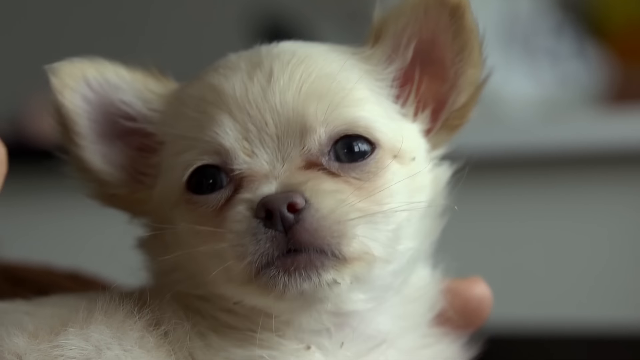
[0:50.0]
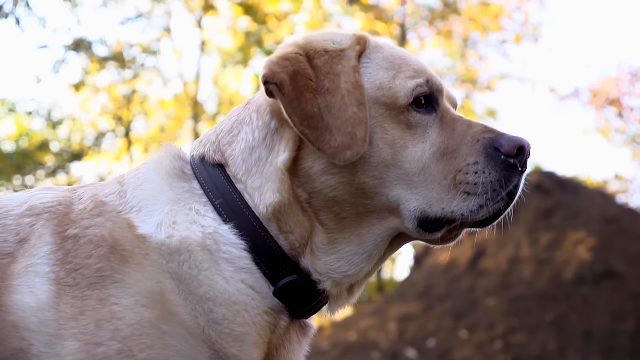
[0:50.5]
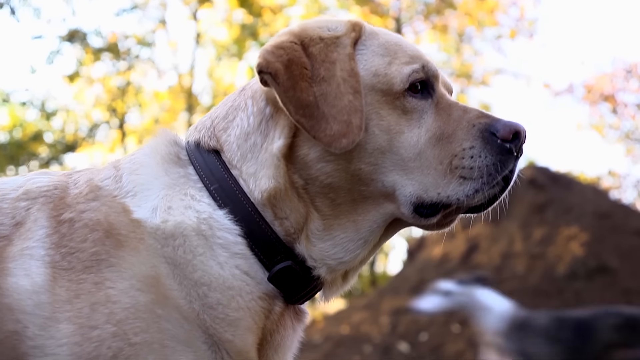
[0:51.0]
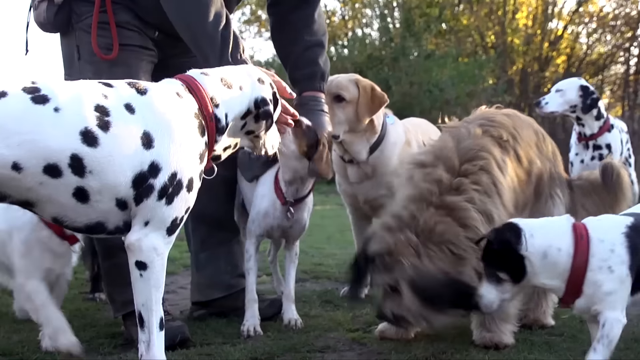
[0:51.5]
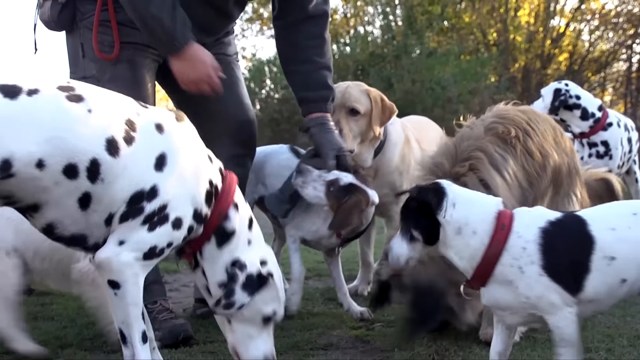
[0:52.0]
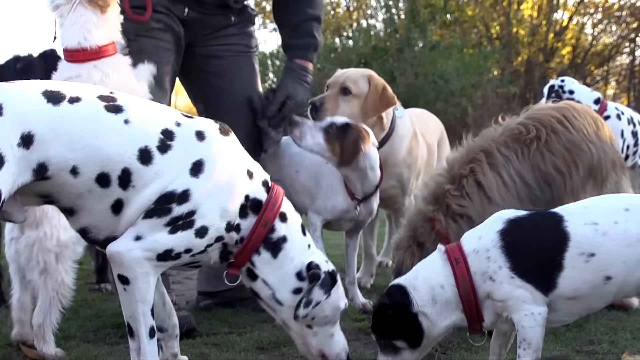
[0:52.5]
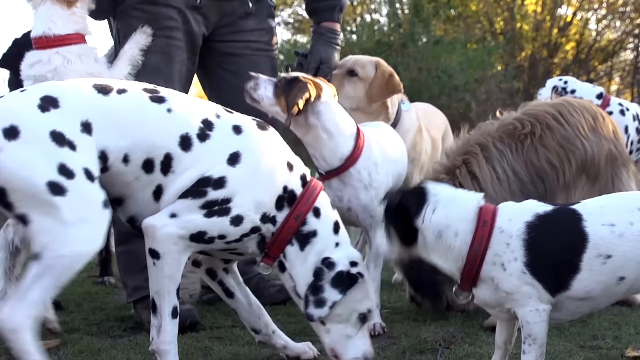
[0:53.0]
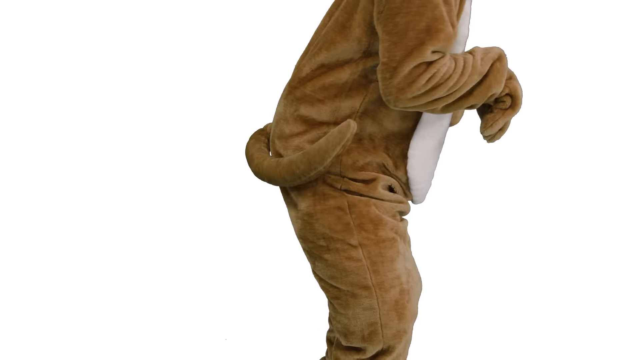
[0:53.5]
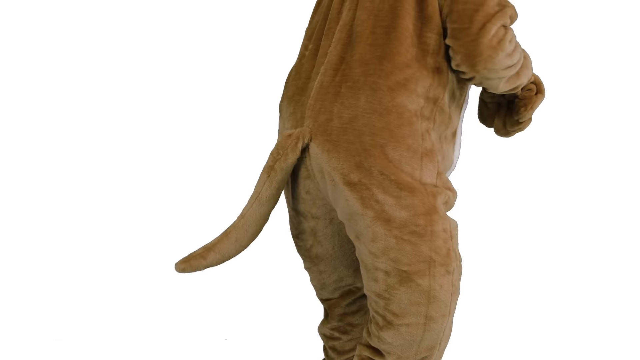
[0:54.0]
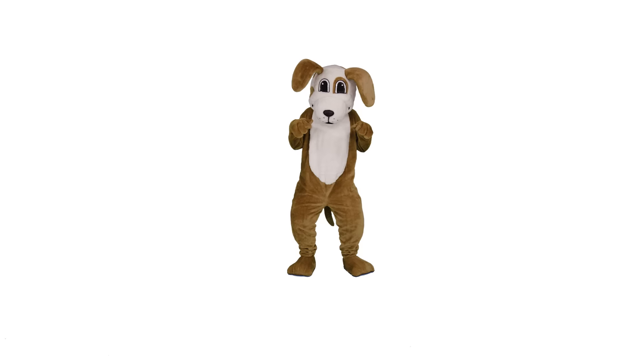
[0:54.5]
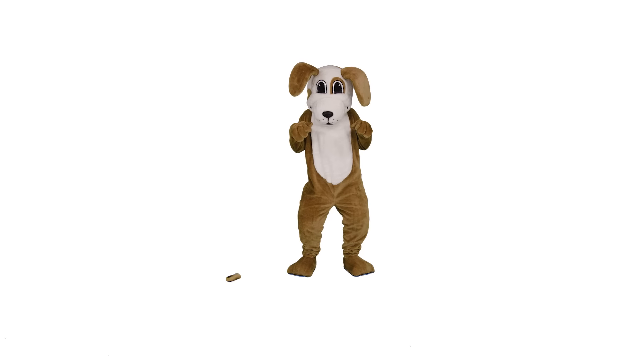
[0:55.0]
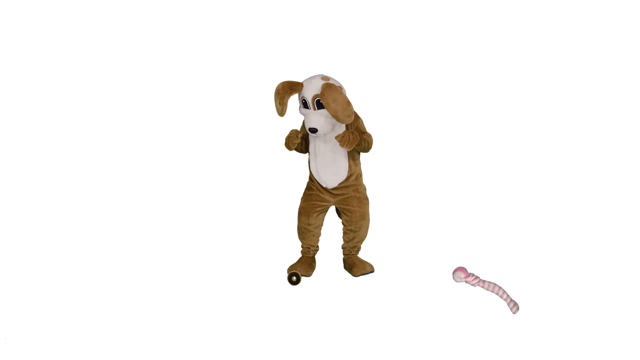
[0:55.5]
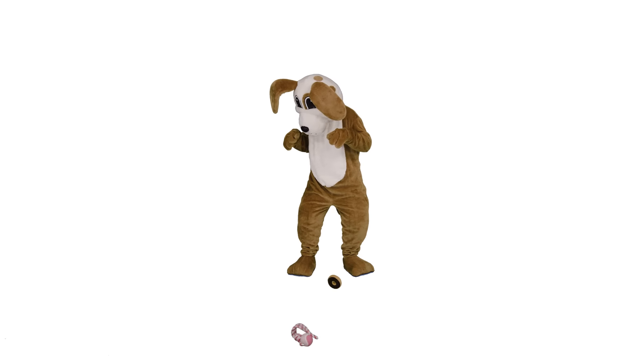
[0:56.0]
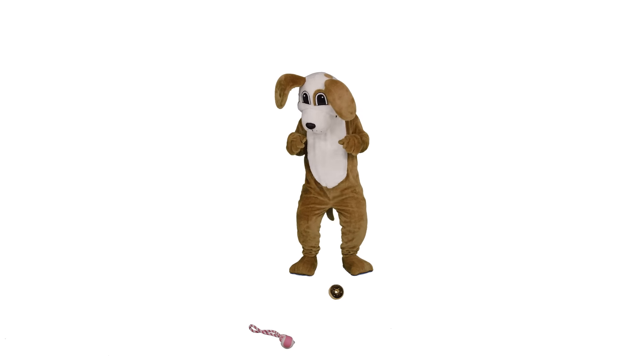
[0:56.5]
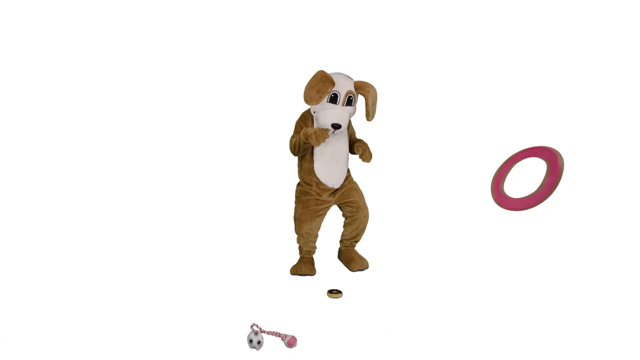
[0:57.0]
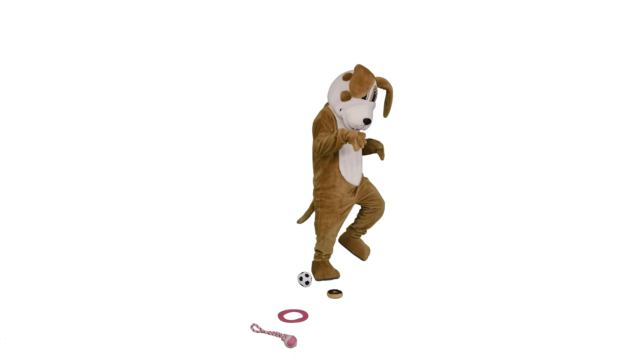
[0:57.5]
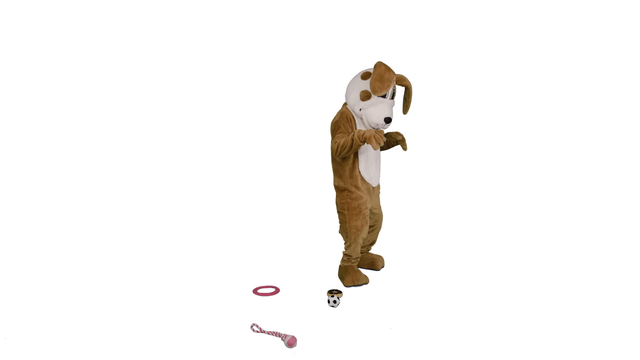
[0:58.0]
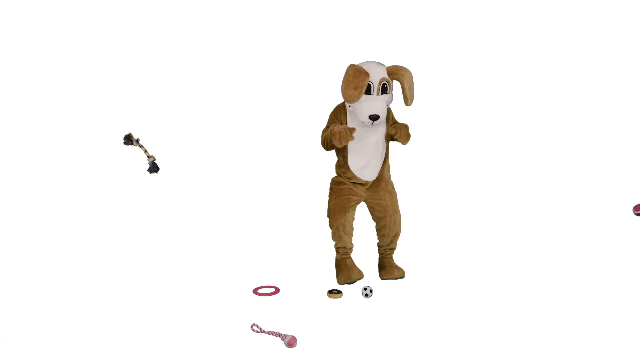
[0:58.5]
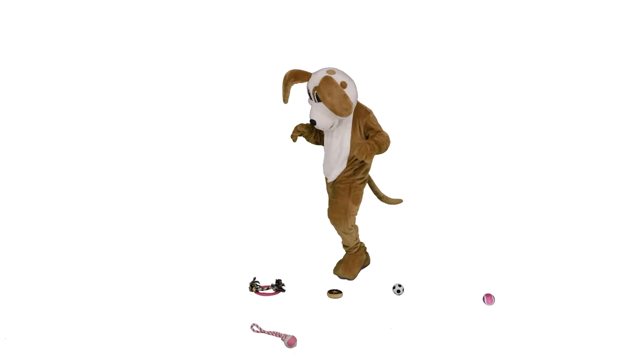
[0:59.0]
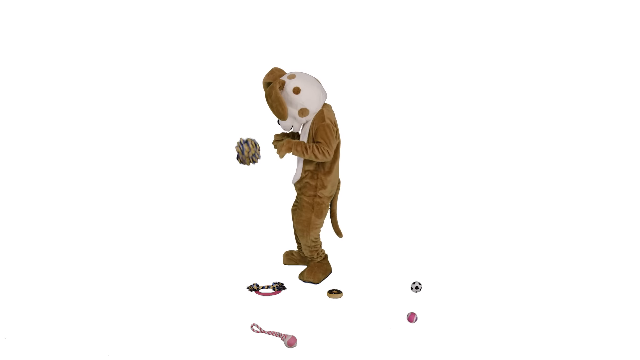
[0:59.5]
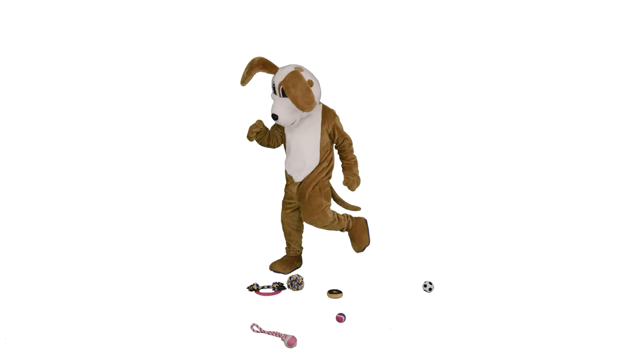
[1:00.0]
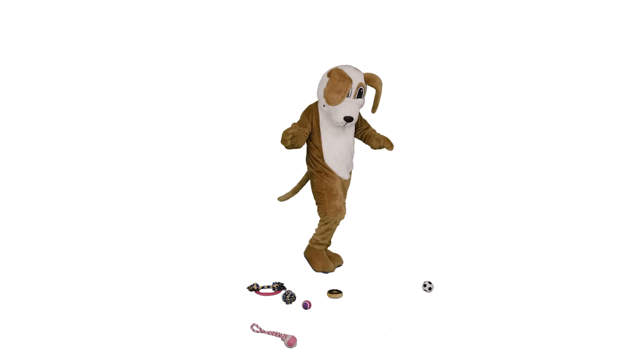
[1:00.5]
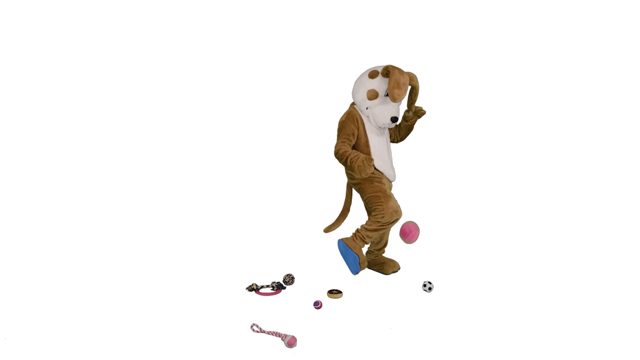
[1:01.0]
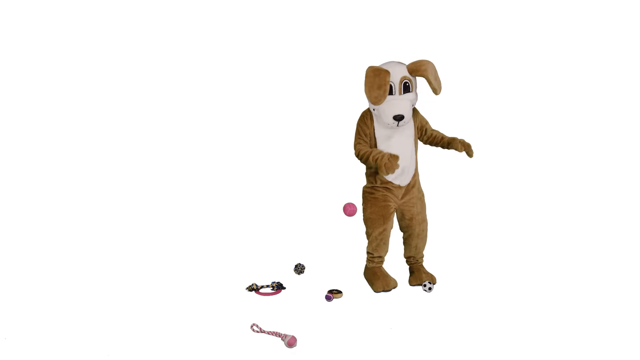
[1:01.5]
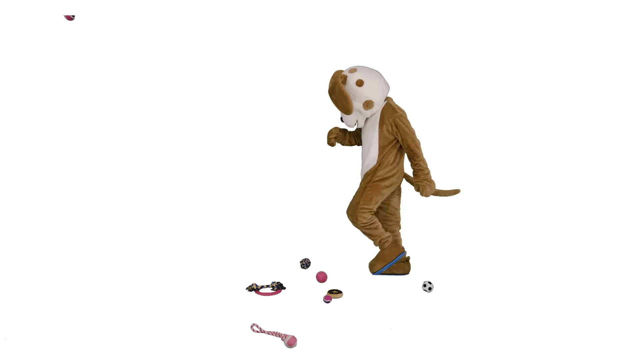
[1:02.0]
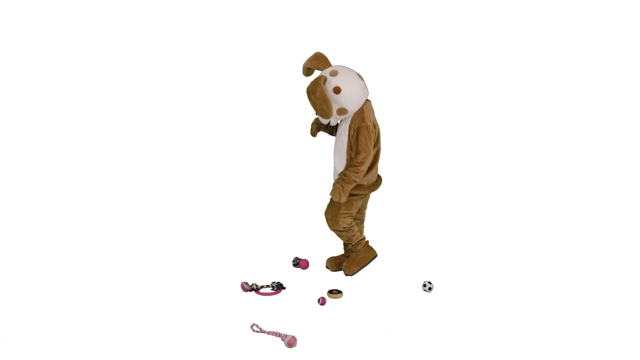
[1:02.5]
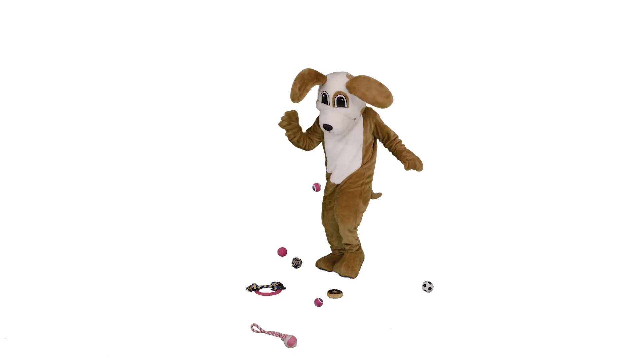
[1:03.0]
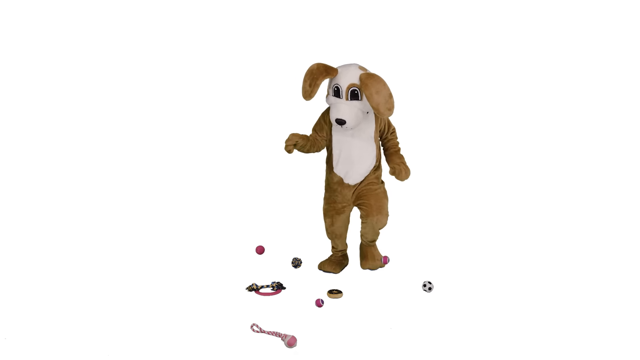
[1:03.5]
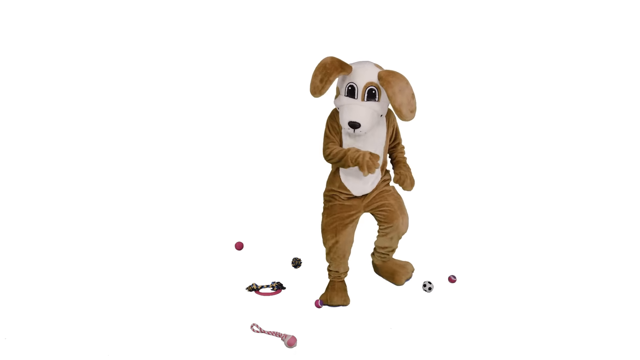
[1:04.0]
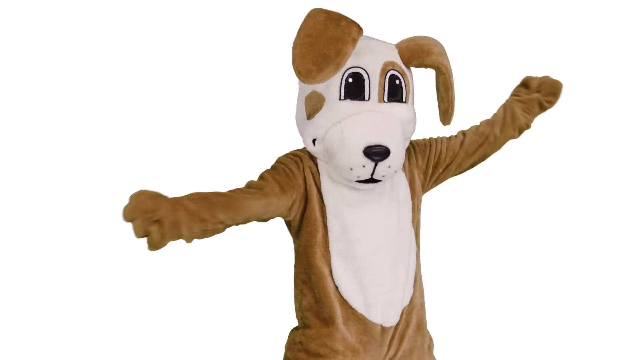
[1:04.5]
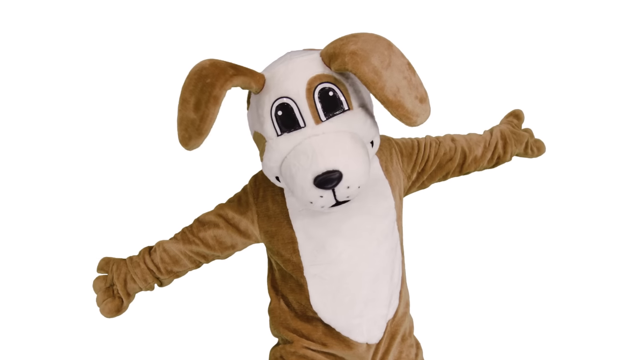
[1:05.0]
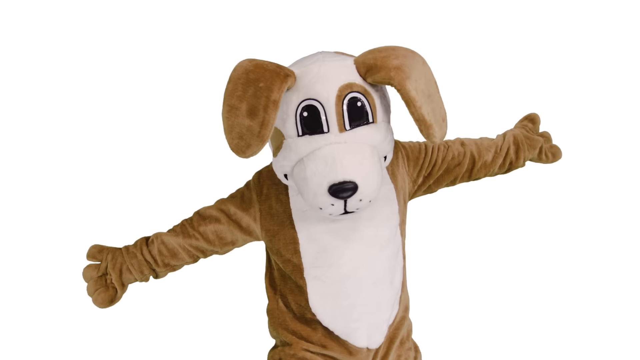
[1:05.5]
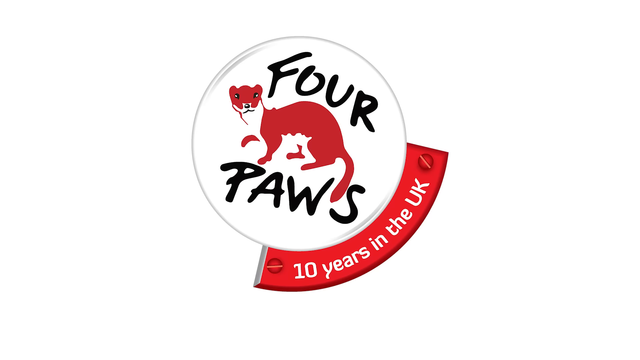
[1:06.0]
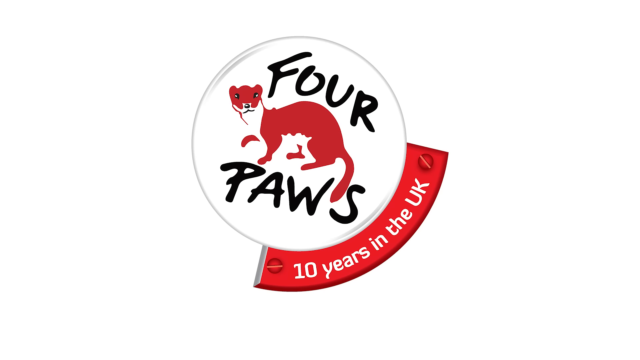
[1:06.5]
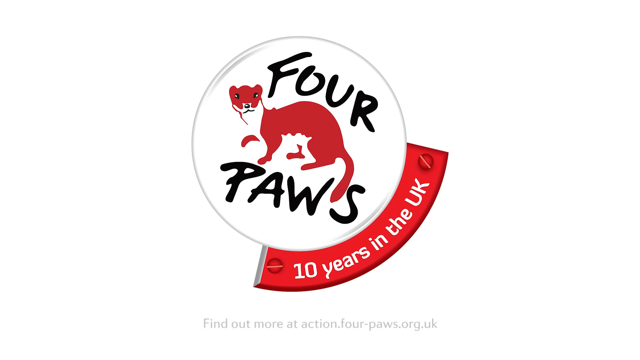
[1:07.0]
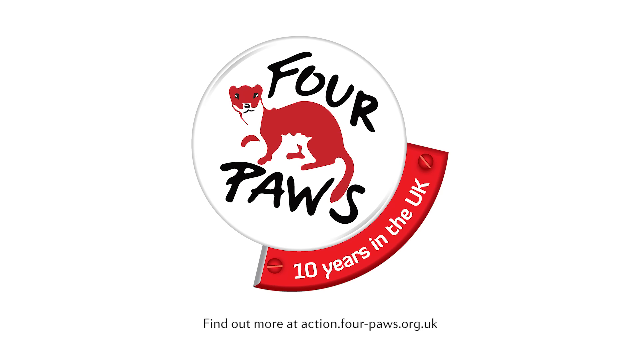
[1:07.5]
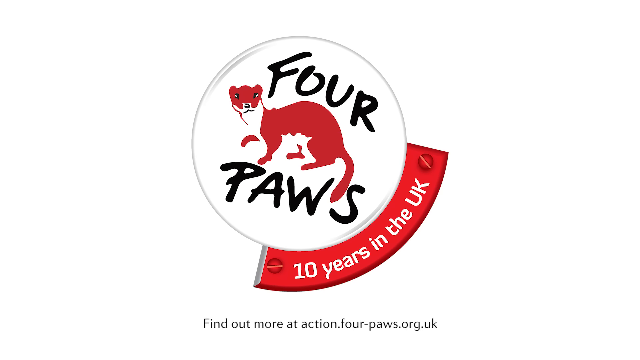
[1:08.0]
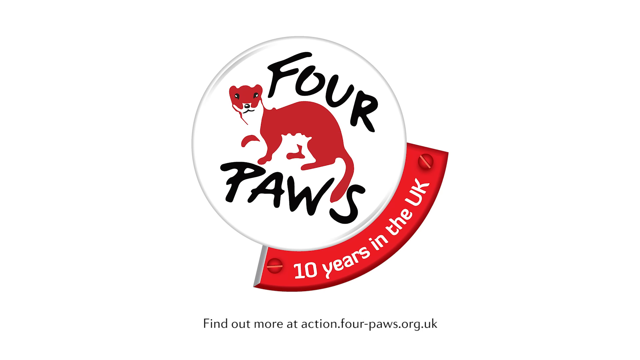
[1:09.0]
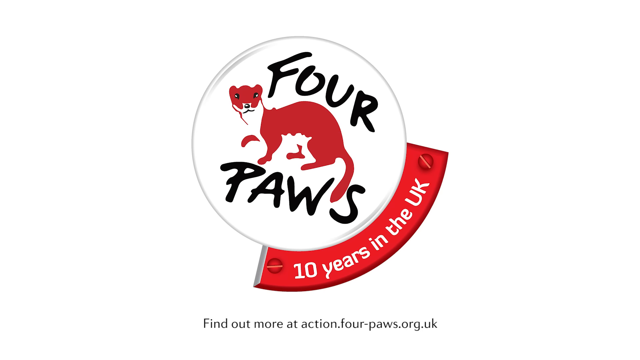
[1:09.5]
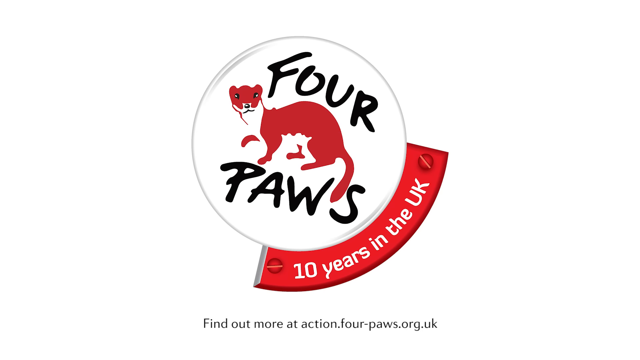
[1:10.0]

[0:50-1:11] A small puppy looks sad, staring at the camera, followed by a German shepherd with a brown collar on its neck. Many dogs appear, including a Dalmatian, with seven or more different breeds. A person in black wearing one brown glove on their left hand touches them. The dogs all have red collars on their necks, and one of the white dogs jumps on the person. The person in the brown costume wiggles their tail and stands up as a toy is thrown at them, then two, then many toys, balls and frisbees, are thrown at them. They jump, dodge the toys, run around and jump in a funny way. The balls are all different colors.